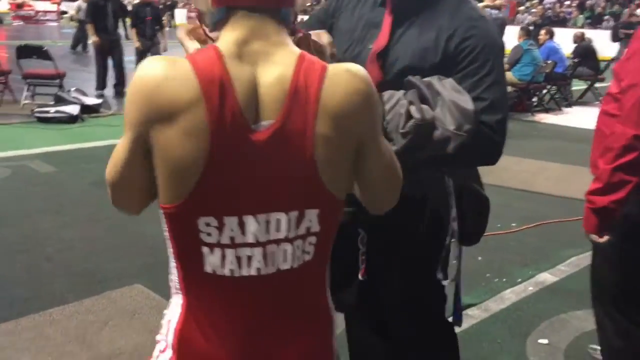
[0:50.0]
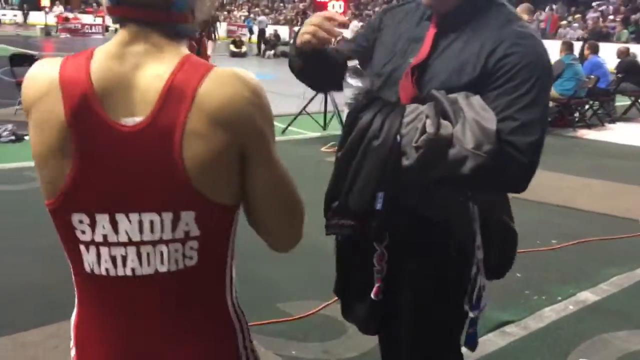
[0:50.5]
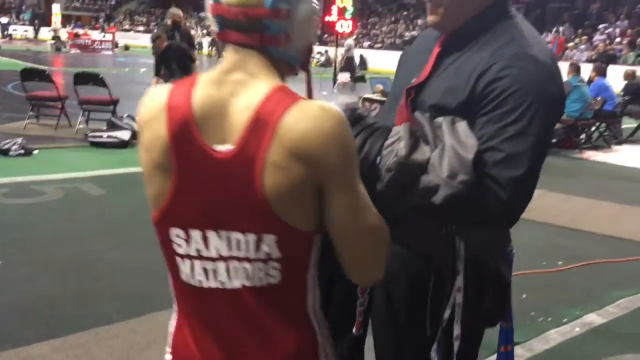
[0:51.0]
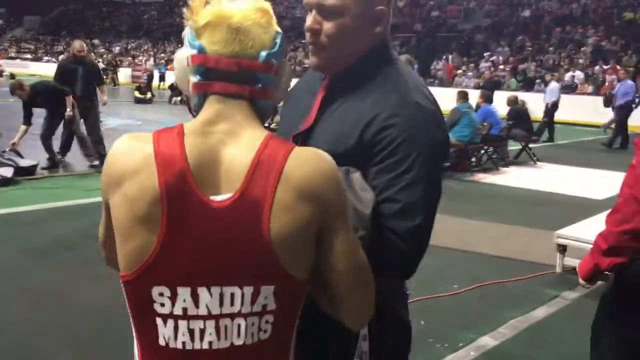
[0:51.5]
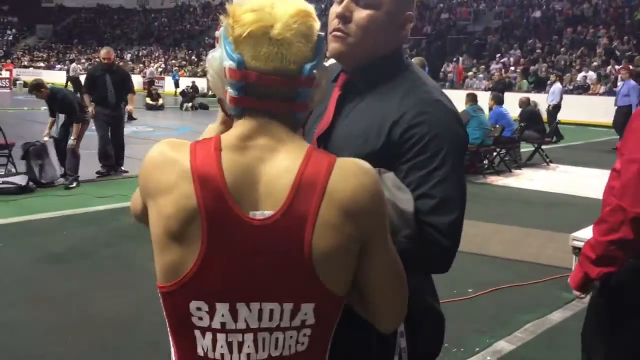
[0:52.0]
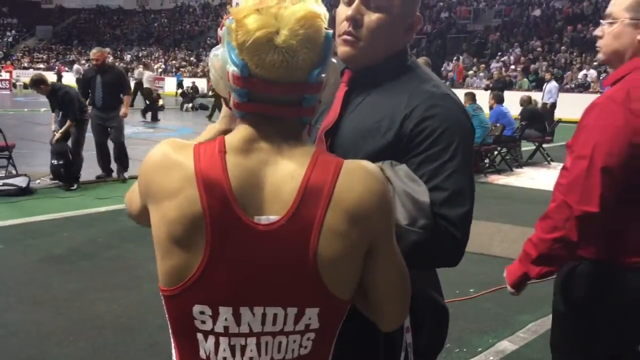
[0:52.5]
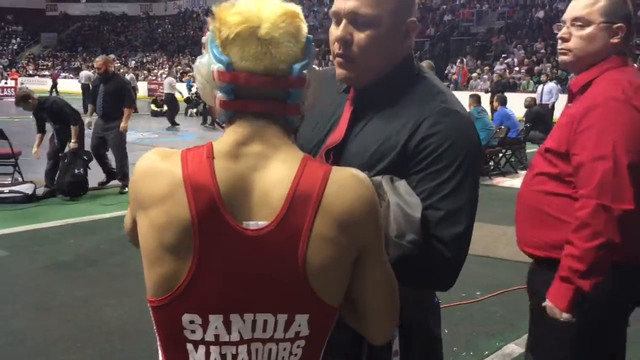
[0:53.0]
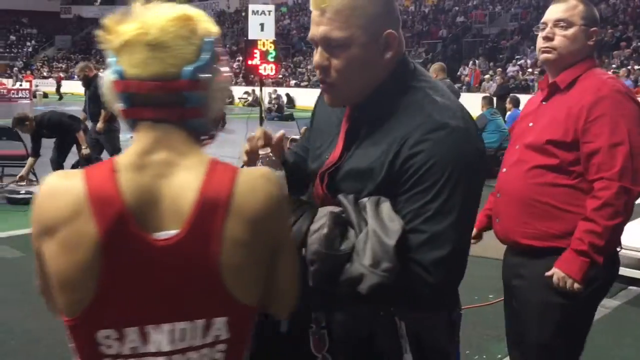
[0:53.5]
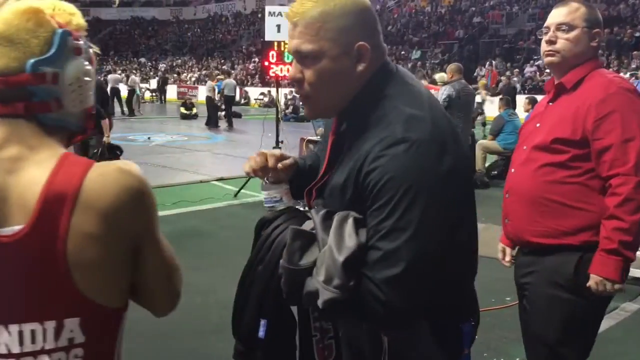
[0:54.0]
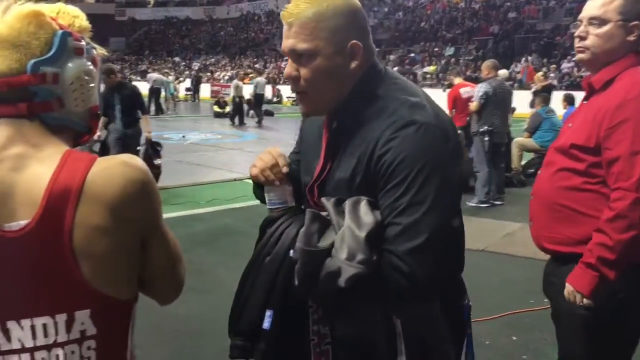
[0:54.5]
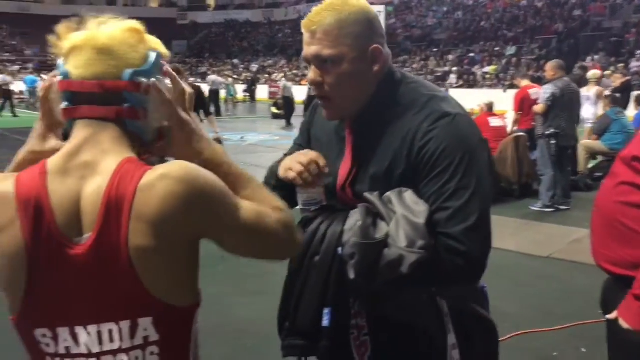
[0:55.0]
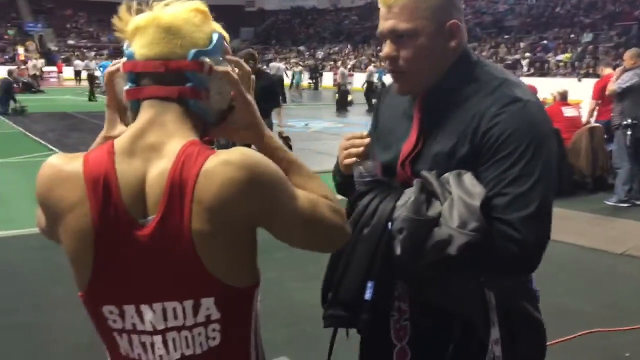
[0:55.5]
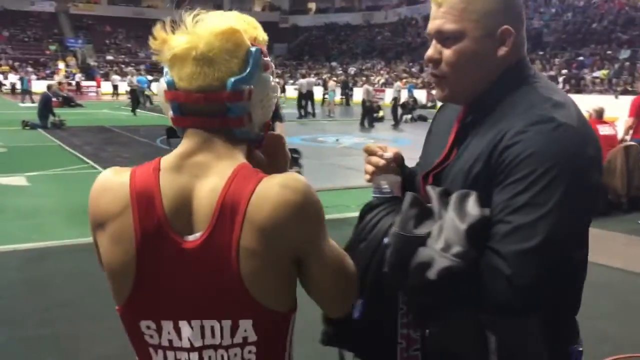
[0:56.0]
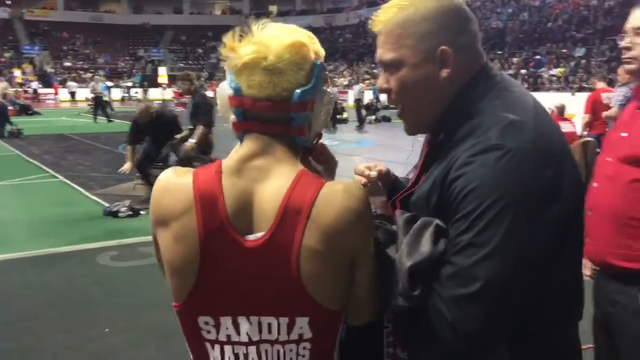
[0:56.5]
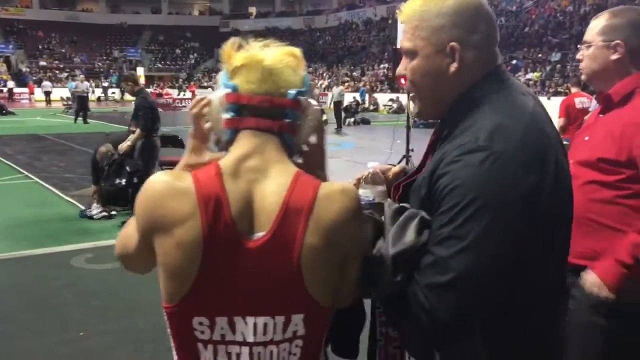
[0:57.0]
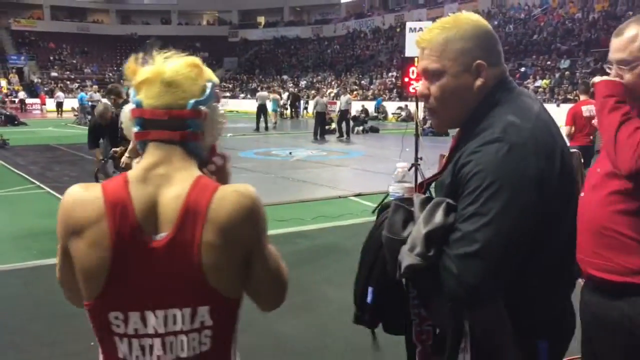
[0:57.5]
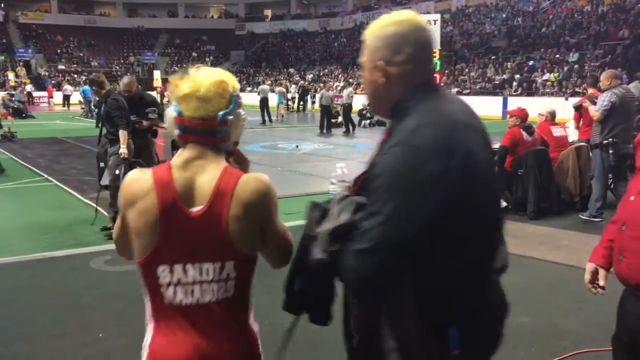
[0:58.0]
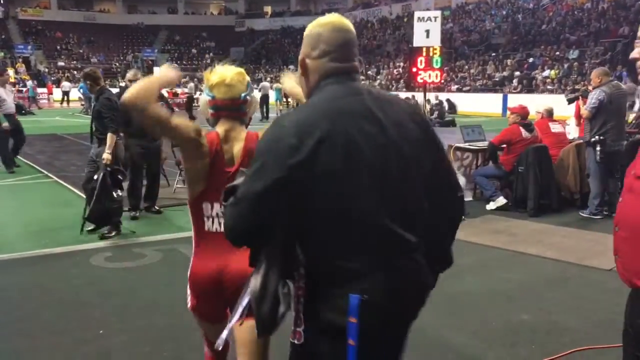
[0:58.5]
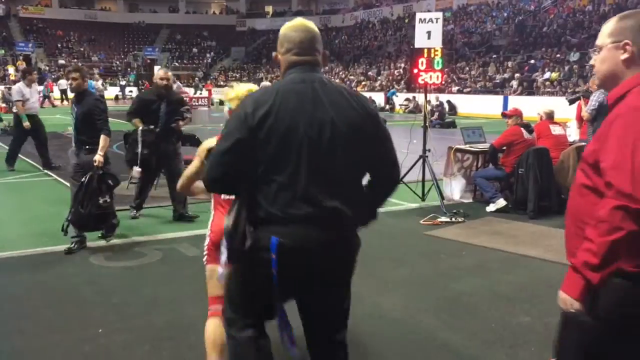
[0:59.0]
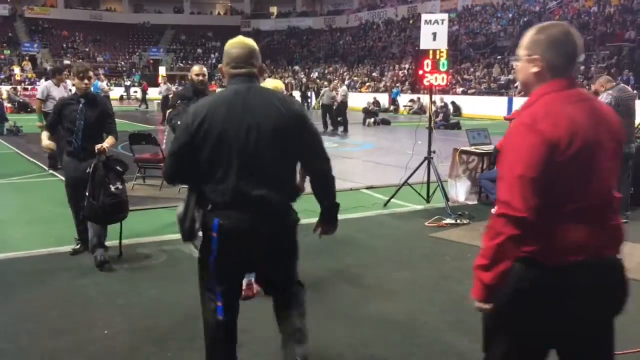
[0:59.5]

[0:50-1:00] A wrestler gets ready to go onto the mat. He puts on his headgear; his one-piece wrestling jersey has his school insignia on the back, with the name "Sandia Matadors." After the headgear is on, he takes a small mouthful of water, and his coach talks to him. When the coach is done, he runs out onto the mats to begin his match.